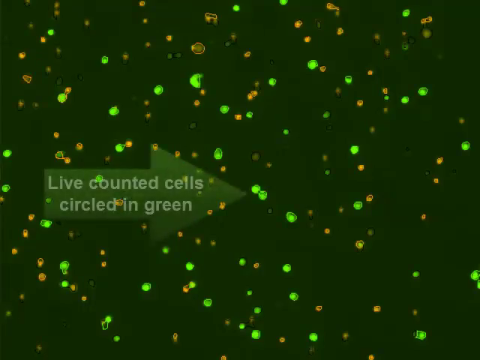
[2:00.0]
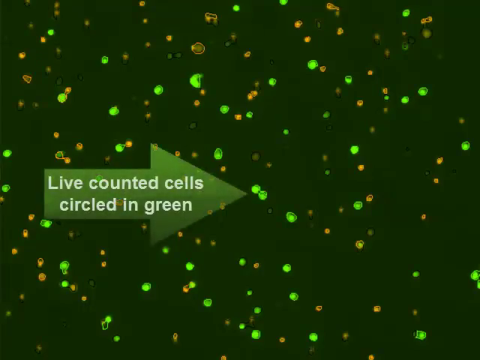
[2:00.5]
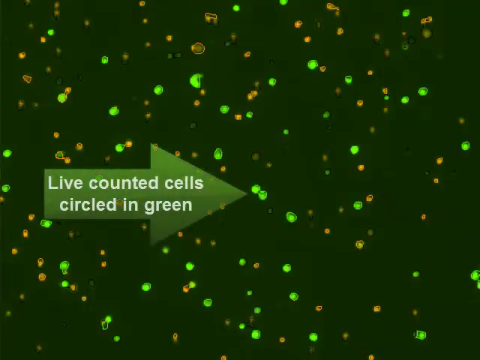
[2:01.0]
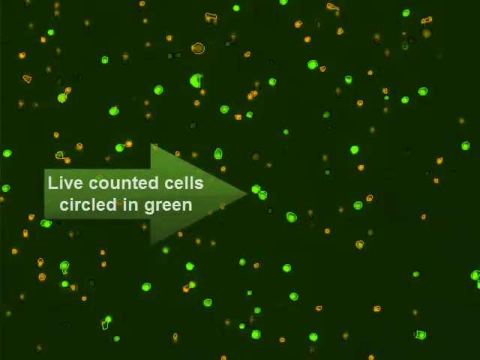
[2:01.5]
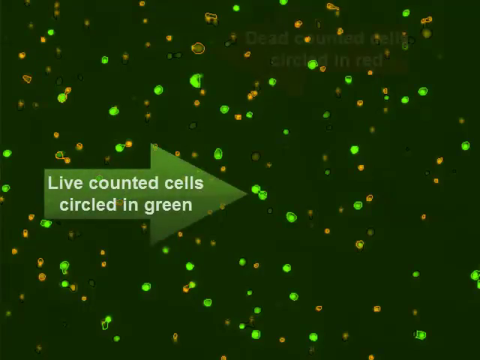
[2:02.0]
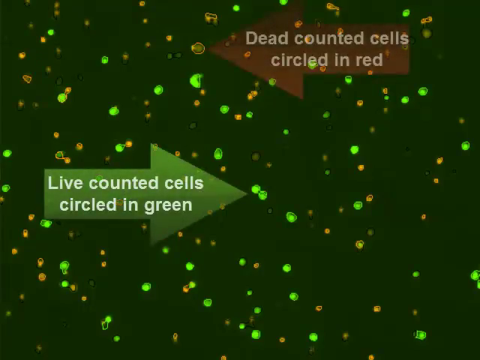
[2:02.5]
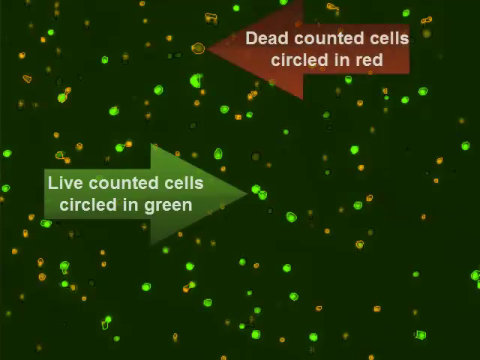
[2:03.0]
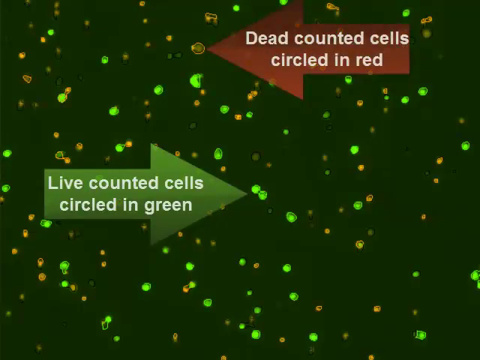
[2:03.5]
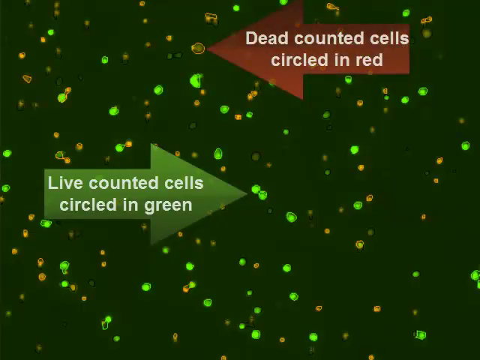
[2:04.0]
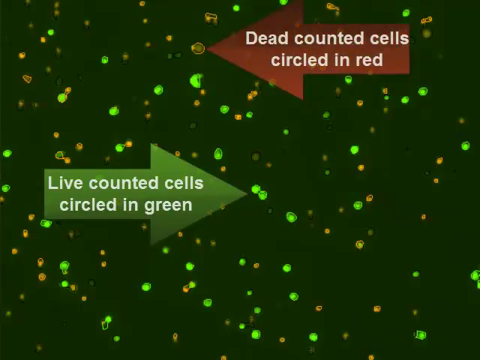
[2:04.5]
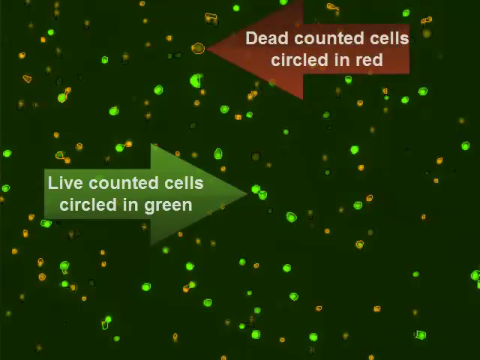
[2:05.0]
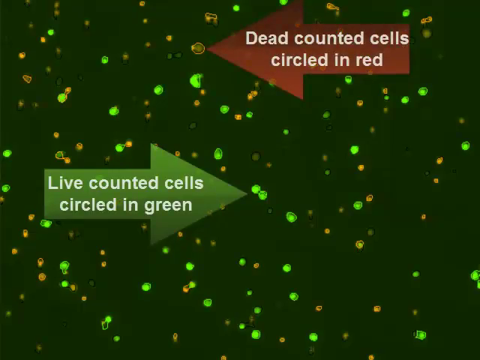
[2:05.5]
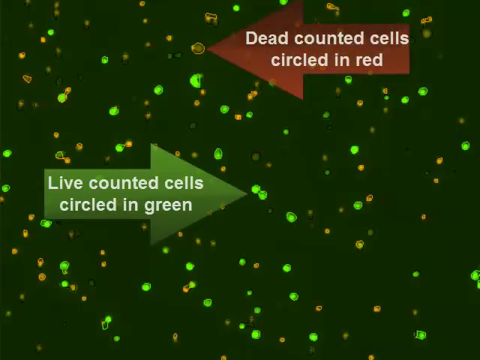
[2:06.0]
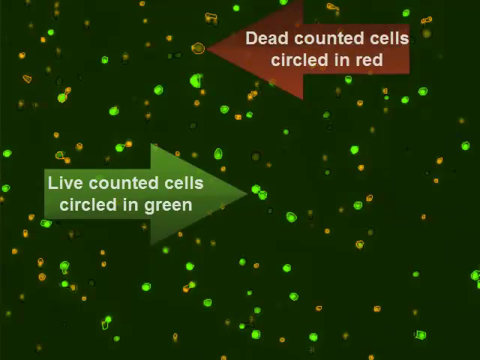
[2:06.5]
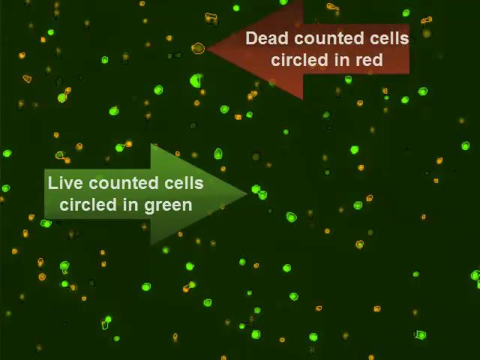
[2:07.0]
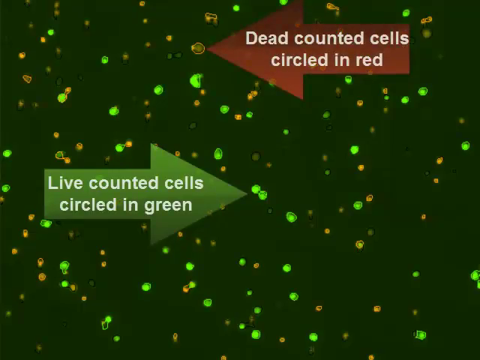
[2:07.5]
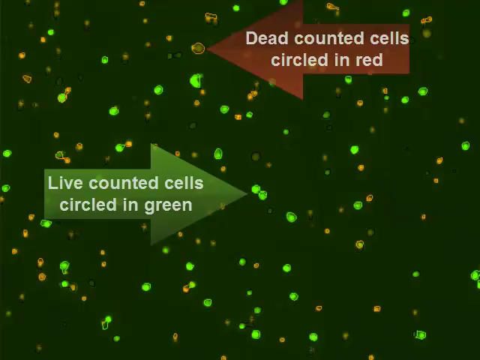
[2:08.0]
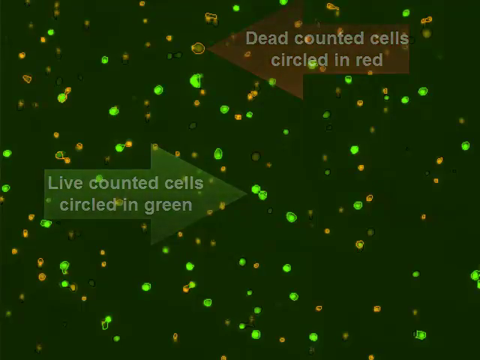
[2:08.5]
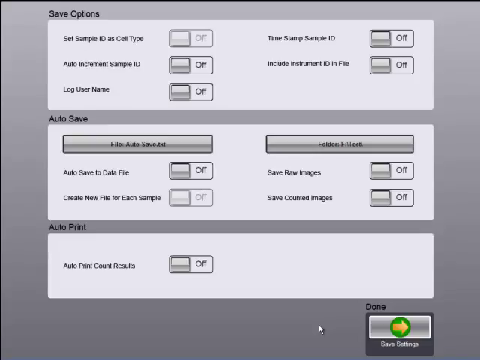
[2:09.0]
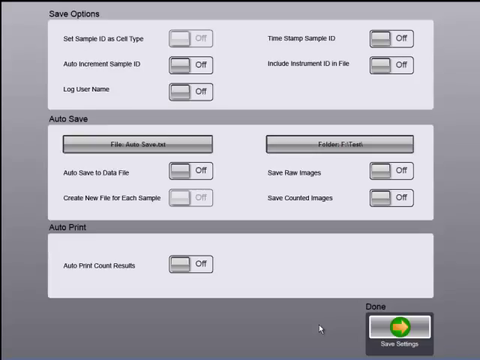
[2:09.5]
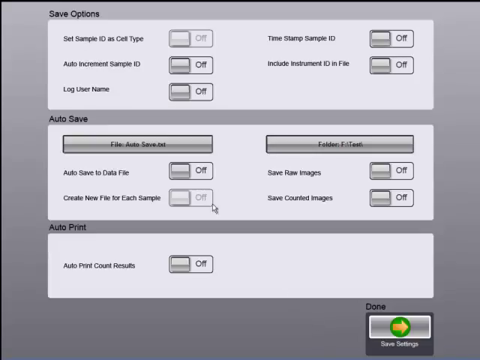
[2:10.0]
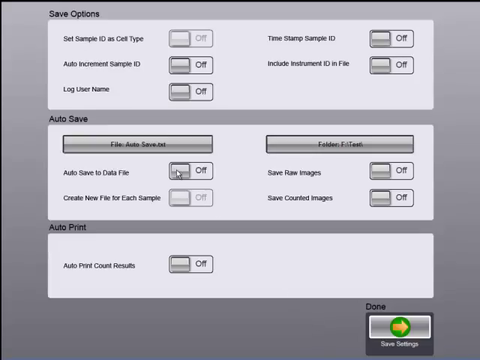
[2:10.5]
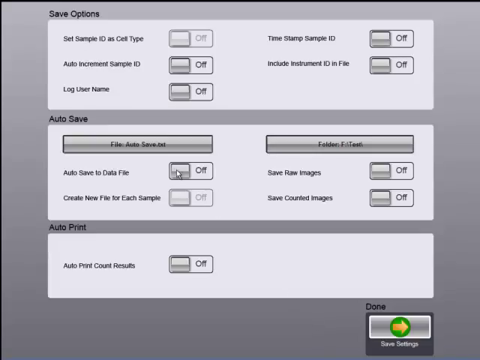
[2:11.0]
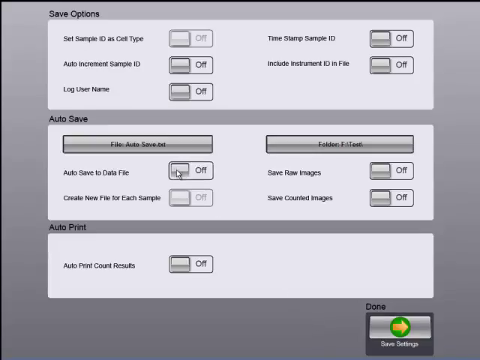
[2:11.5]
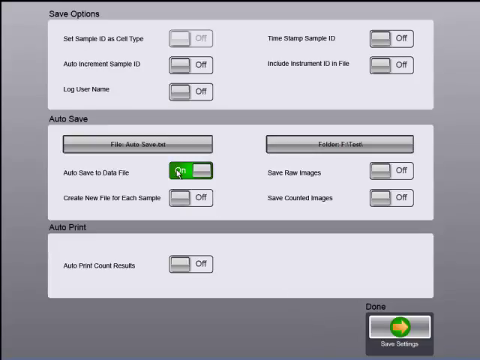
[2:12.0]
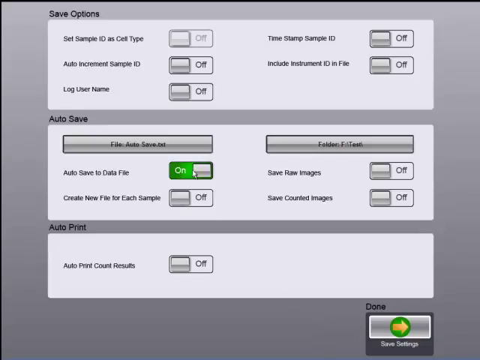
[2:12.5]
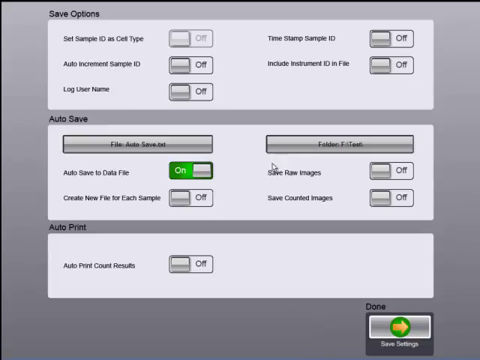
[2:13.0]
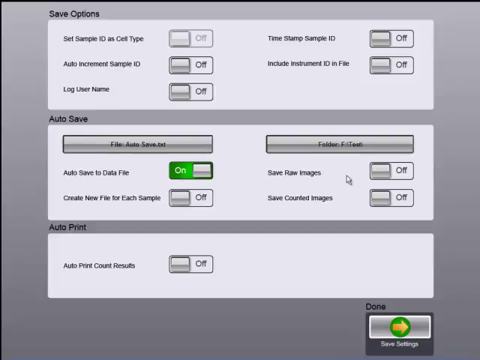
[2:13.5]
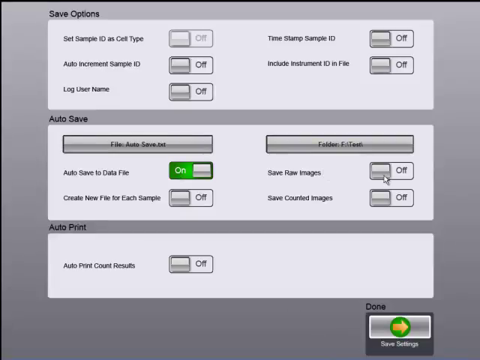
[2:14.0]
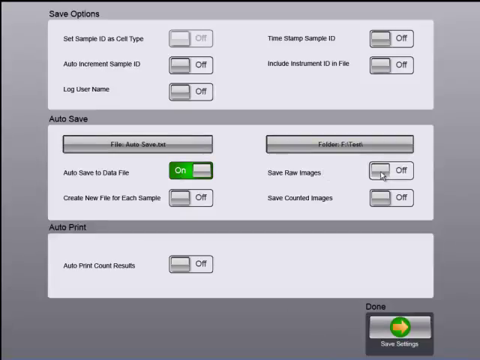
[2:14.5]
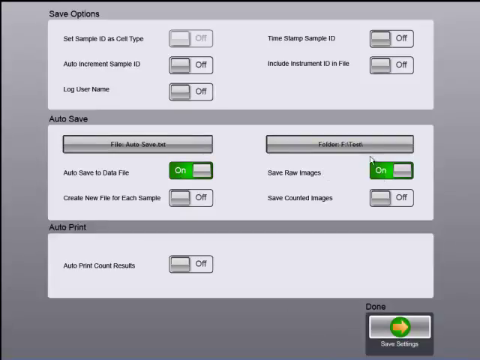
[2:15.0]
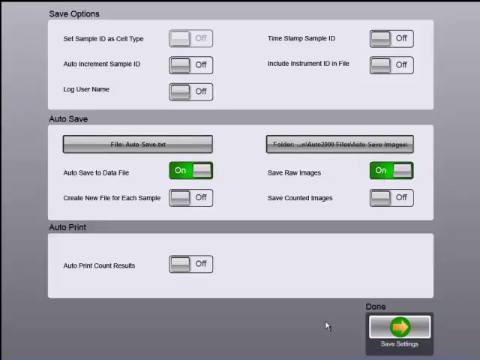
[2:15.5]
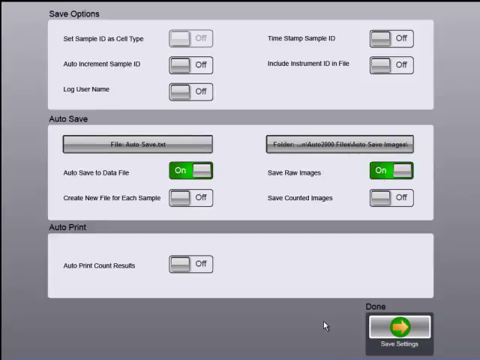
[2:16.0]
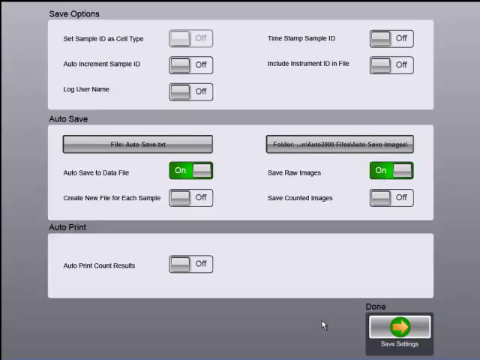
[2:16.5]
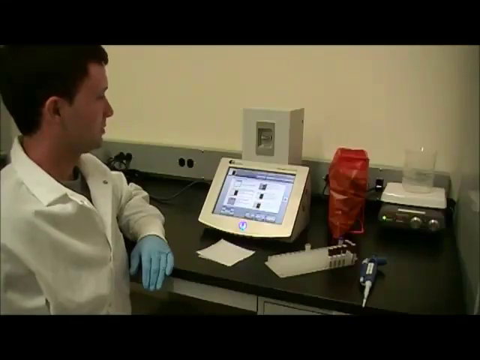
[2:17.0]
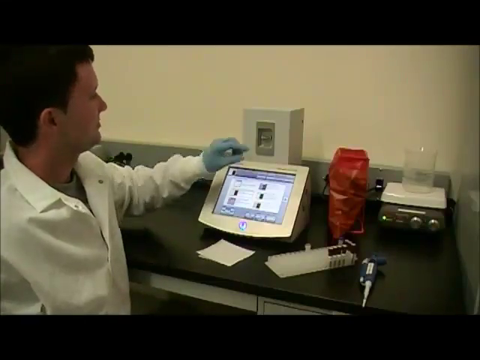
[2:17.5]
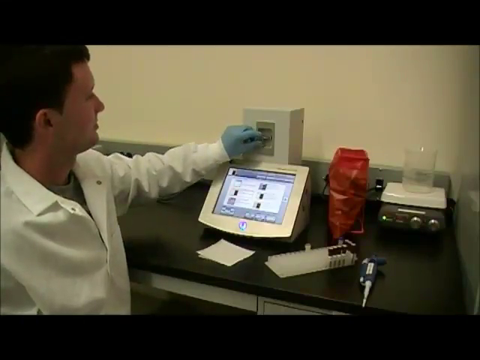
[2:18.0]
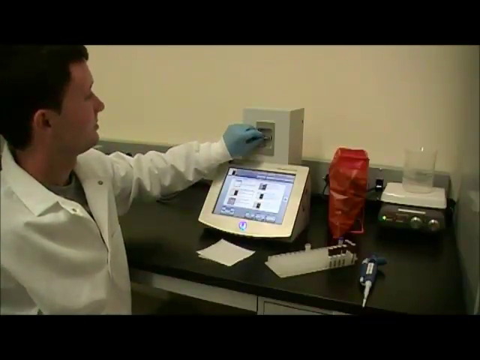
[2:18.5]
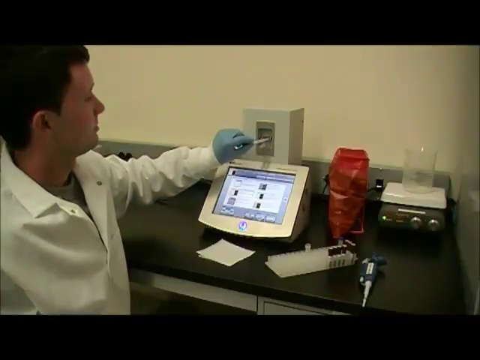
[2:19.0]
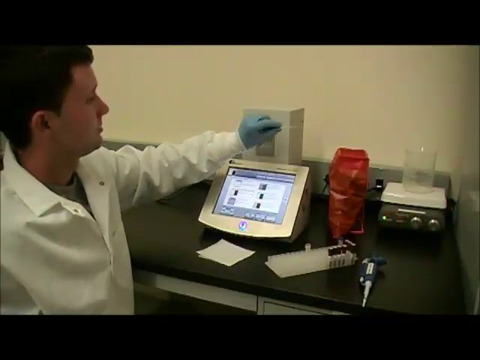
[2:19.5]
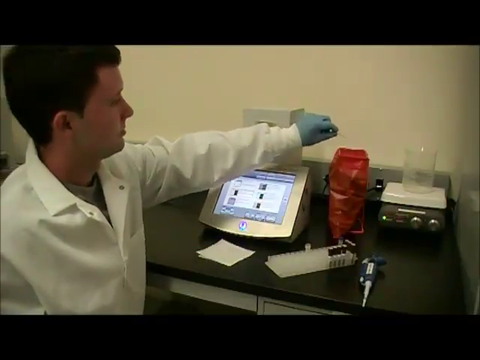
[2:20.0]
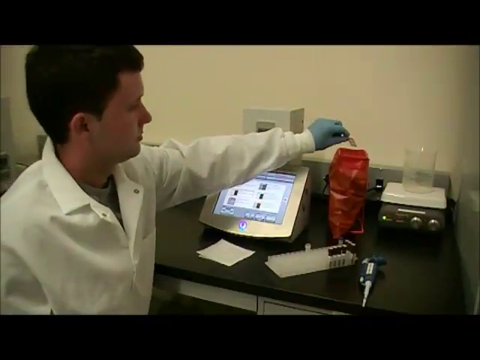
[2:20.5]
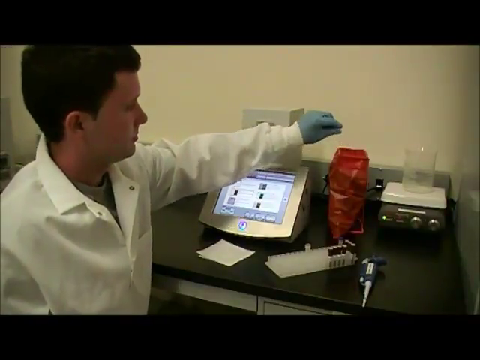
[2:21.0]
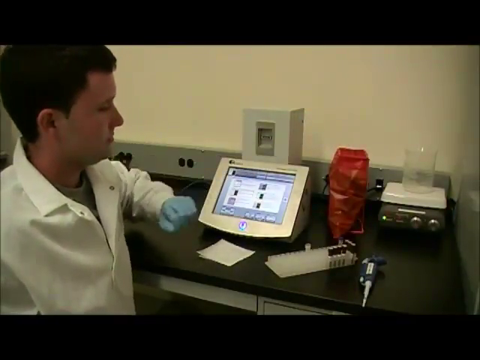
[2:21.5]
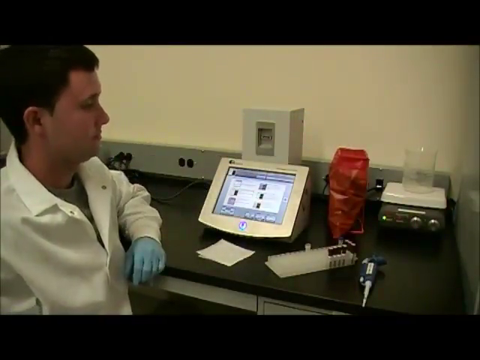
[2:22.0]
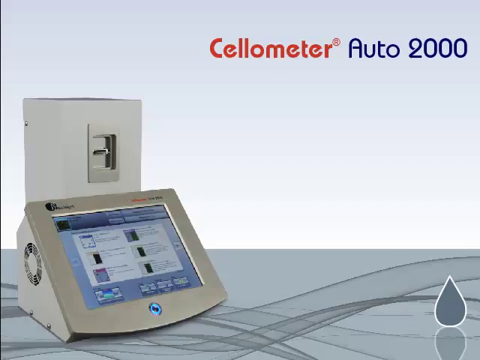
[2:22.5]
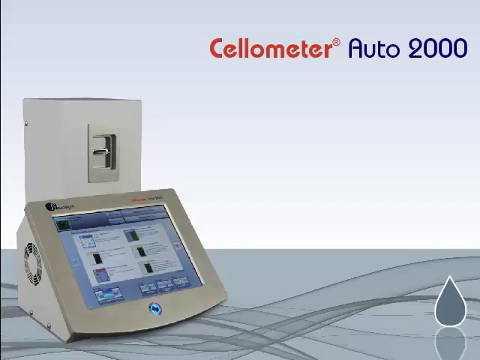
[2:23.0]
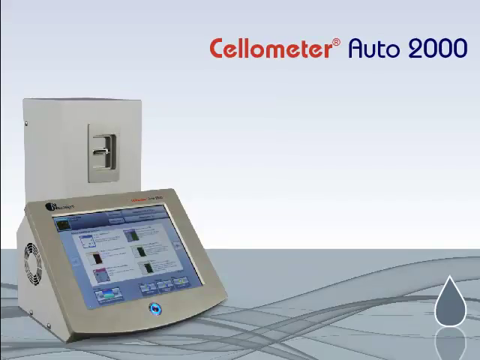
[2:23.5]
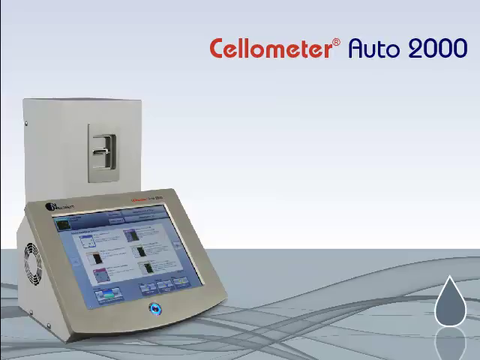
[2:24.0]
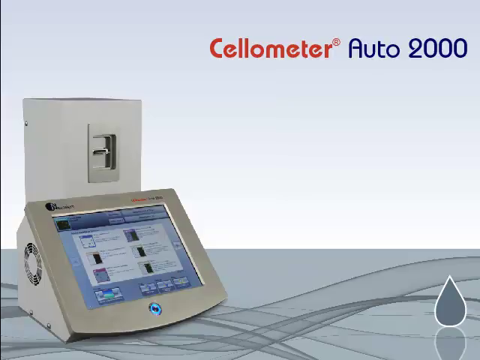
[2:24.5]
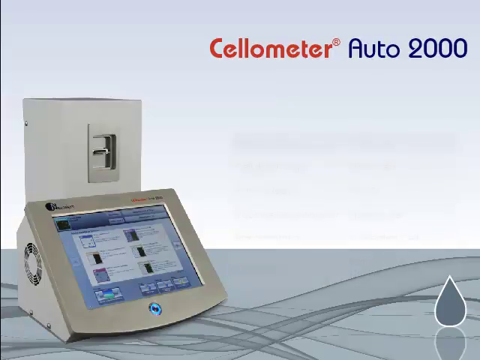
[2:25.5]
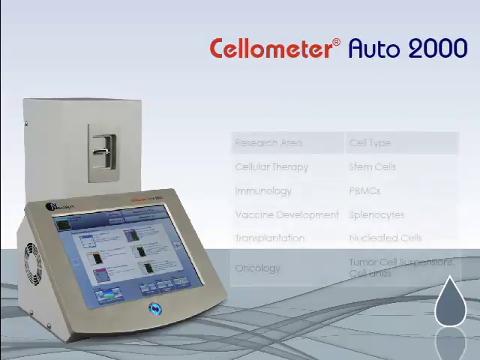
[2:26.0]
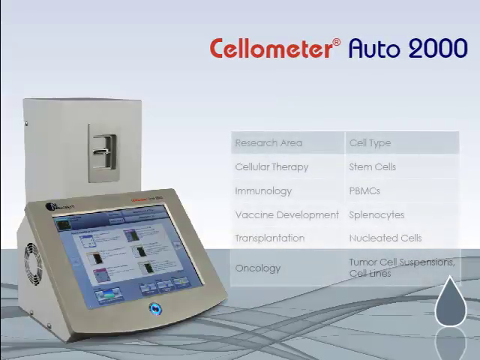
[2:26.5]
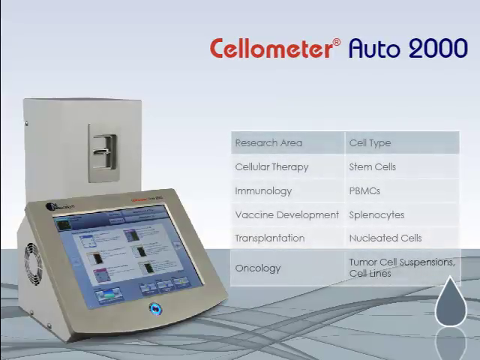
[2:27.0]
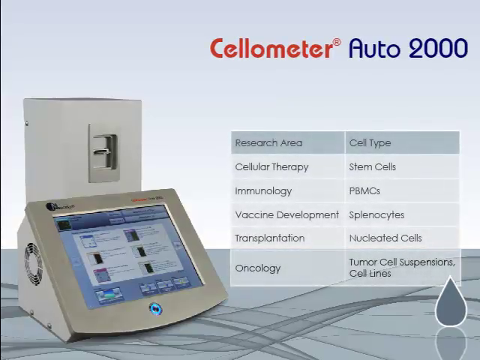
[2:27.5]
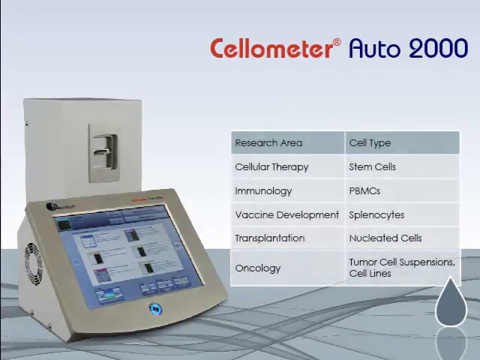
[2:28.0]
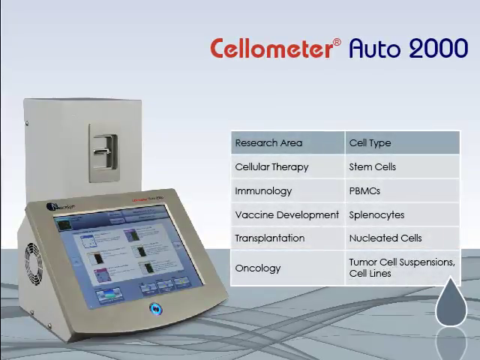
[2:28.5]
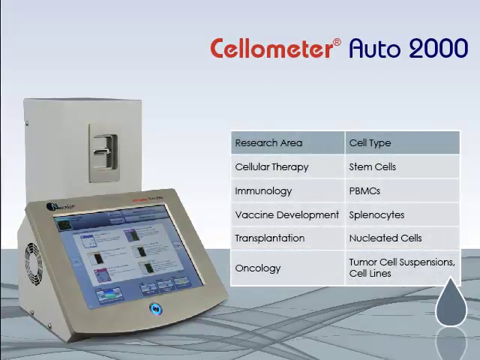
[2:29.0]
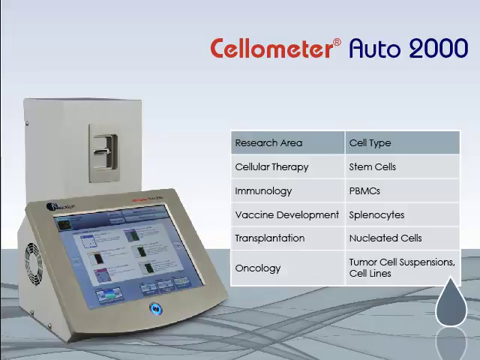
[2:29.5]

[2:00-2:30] Microscopic green and red fluorescent cells are shown. A call-out arrow appears just left of the center of the screen, with pale green text on a darker green background reading "live counted cells circled in green"; counted cells have circles drawn around them in the microscopic view. Another arrow appears in the upper part of the screen, pointing from right to left at a circled red cell, with white text reading "dead counted cells are circled in red". A screen with save options then appears, and the user chooses different auto-save options and chooses to save a raw image. The video cuts back to the technician, who removes the slide from the cellometer receptacle he inserted it into and disposes of it in a medical waste container. A screen then appears with a chart of the device's research areas: cellular therapy, immunology, vaccine development, transplantation and oncology.